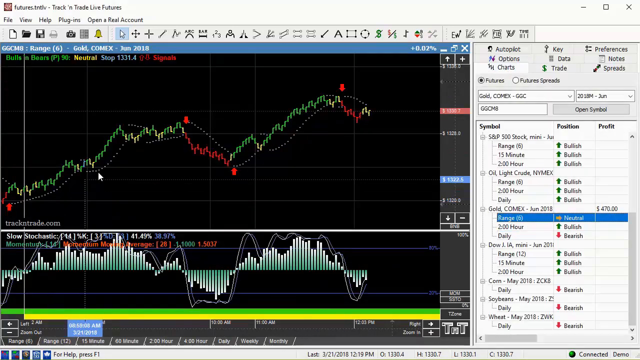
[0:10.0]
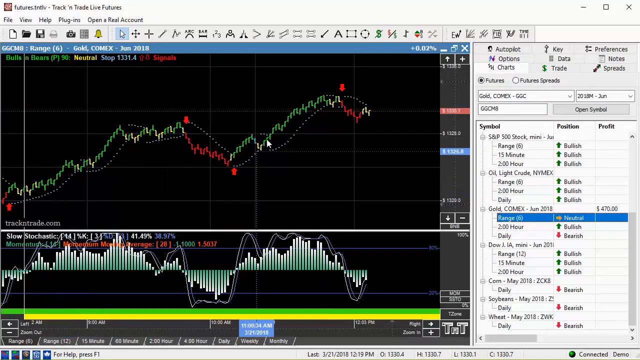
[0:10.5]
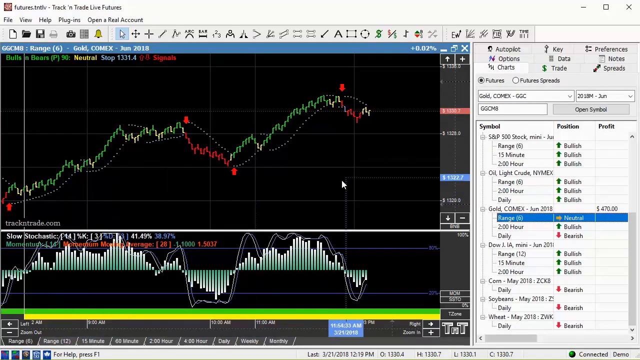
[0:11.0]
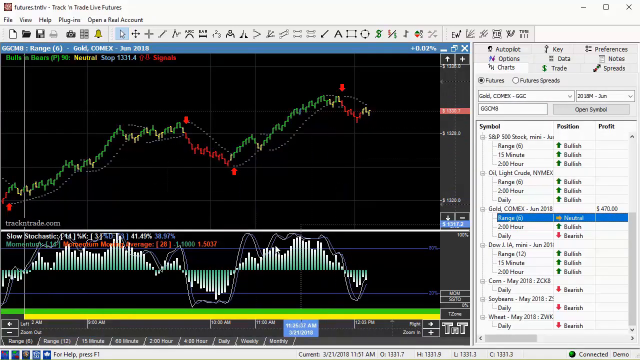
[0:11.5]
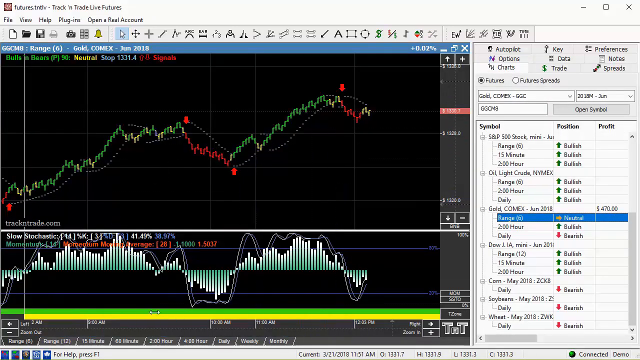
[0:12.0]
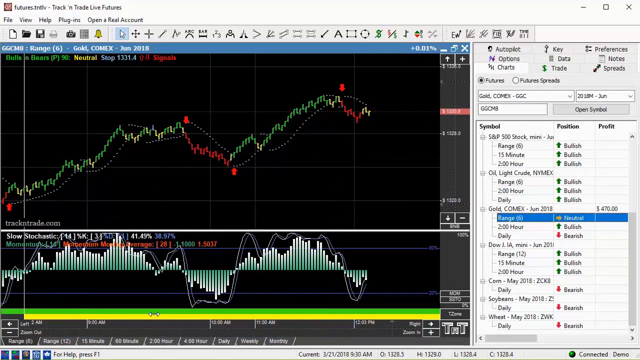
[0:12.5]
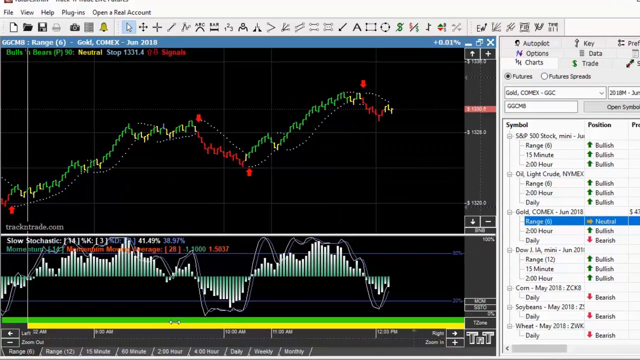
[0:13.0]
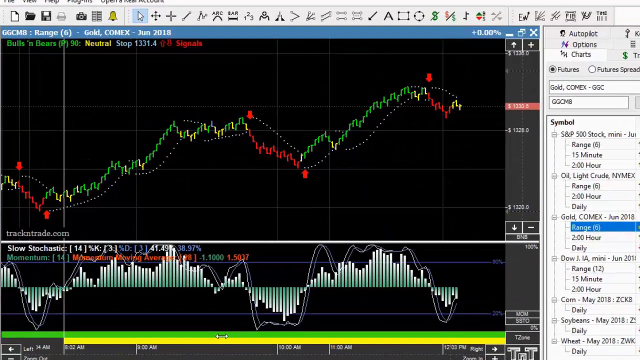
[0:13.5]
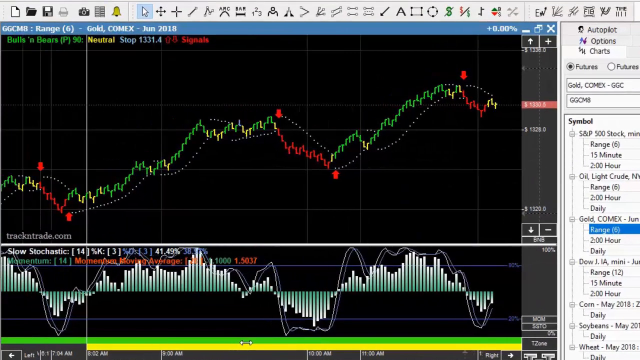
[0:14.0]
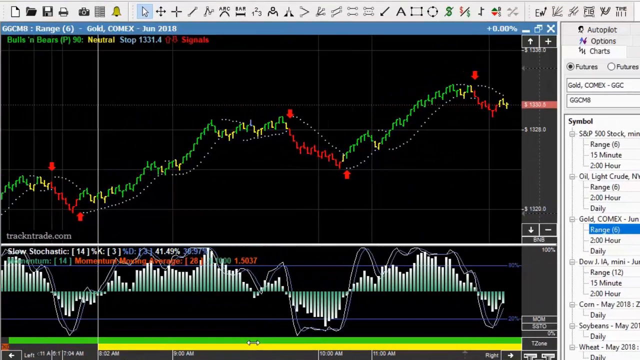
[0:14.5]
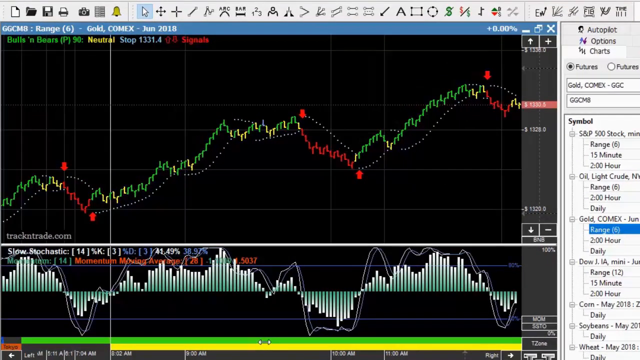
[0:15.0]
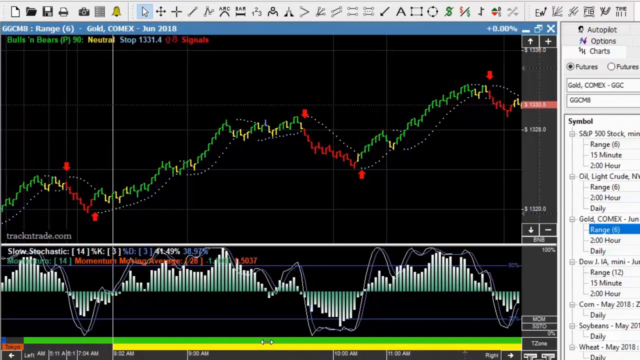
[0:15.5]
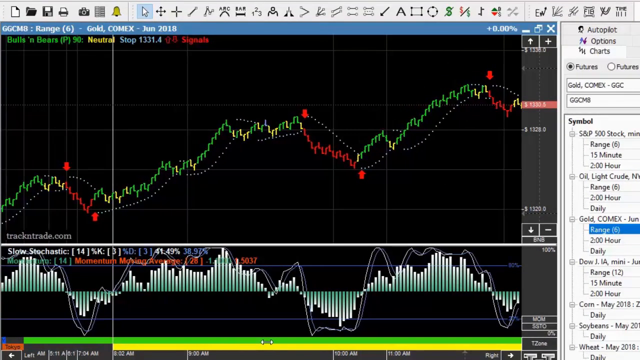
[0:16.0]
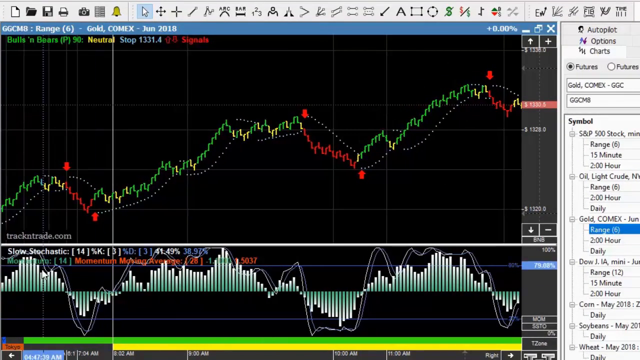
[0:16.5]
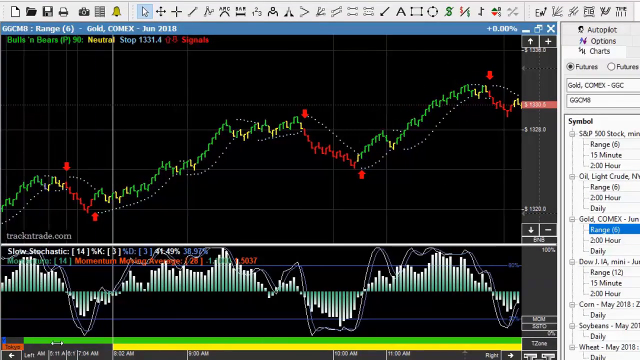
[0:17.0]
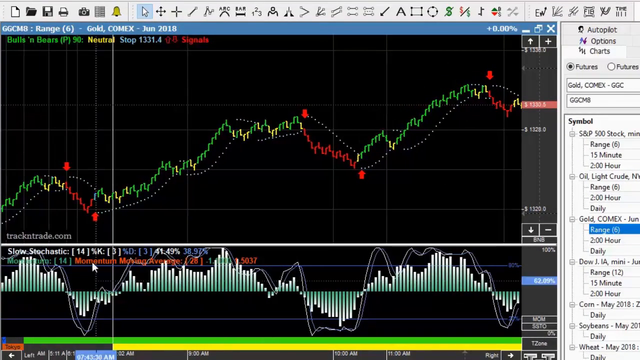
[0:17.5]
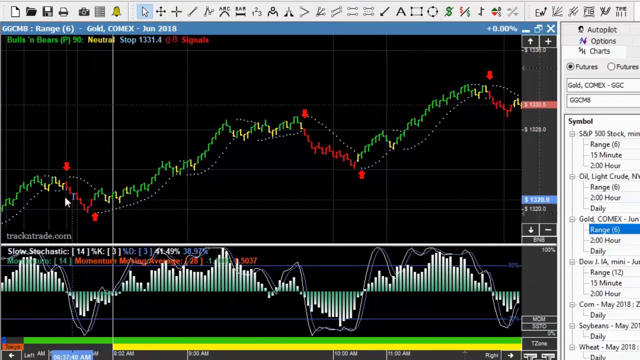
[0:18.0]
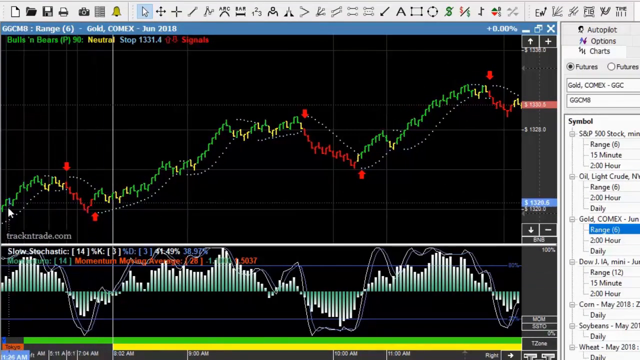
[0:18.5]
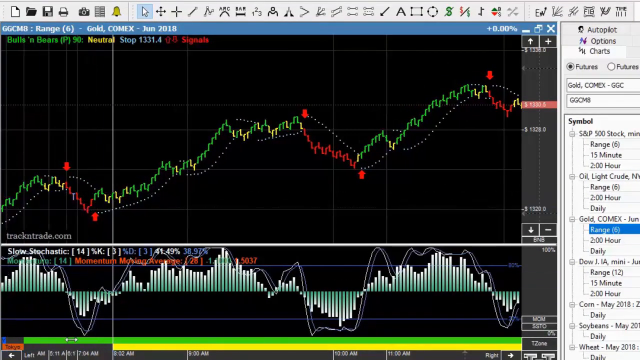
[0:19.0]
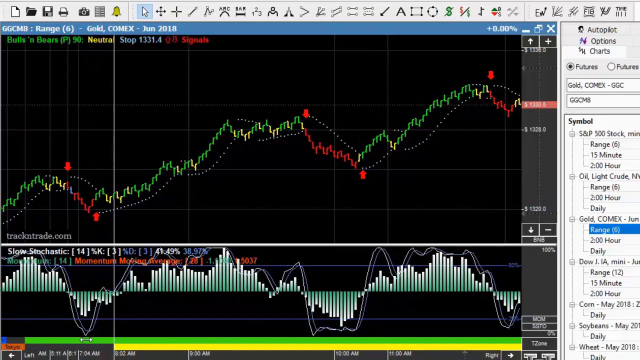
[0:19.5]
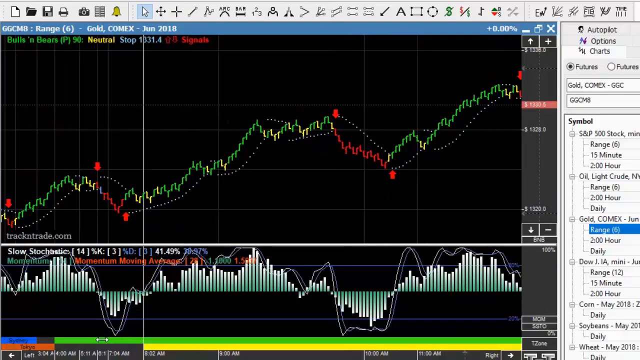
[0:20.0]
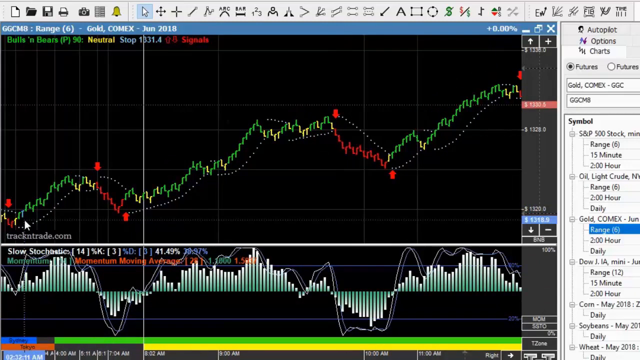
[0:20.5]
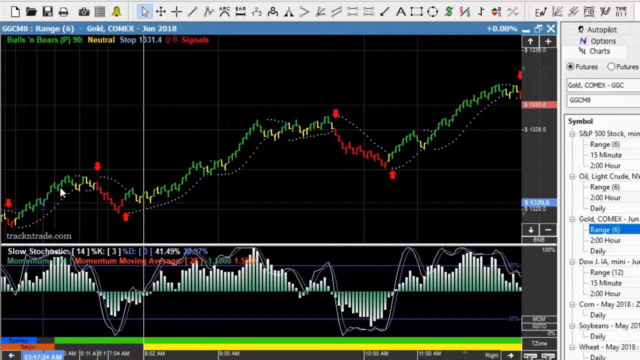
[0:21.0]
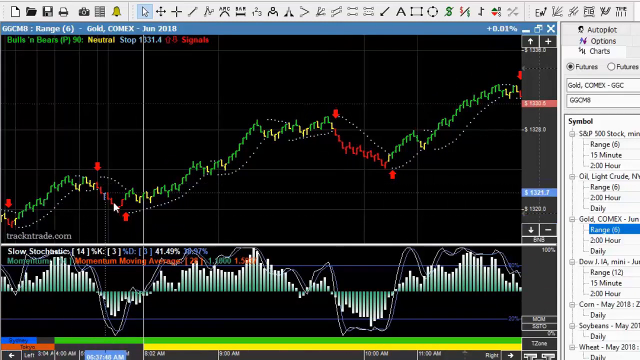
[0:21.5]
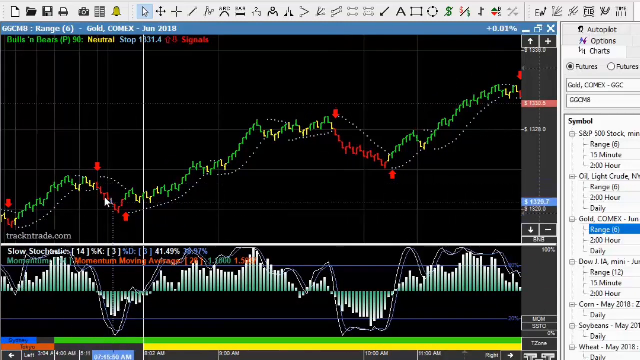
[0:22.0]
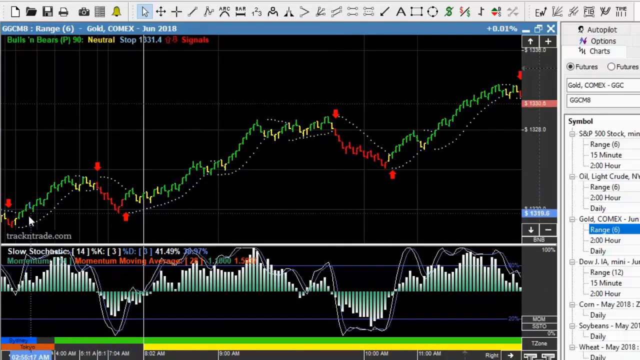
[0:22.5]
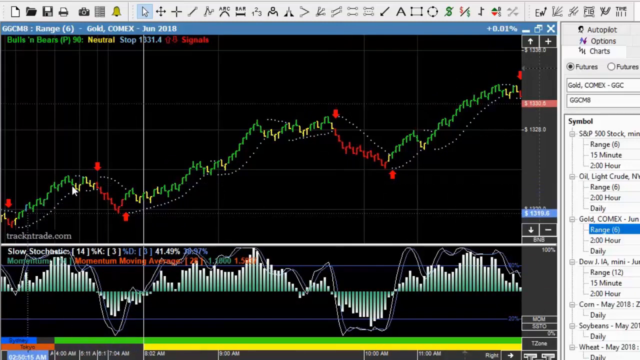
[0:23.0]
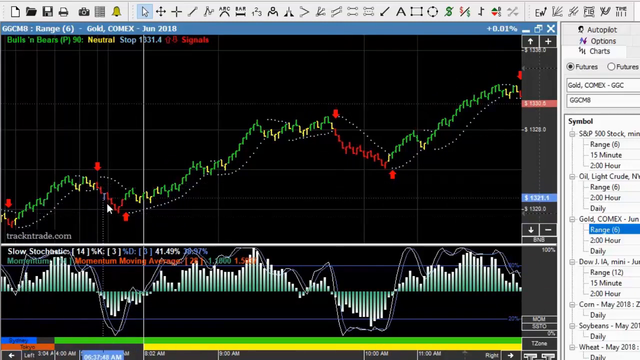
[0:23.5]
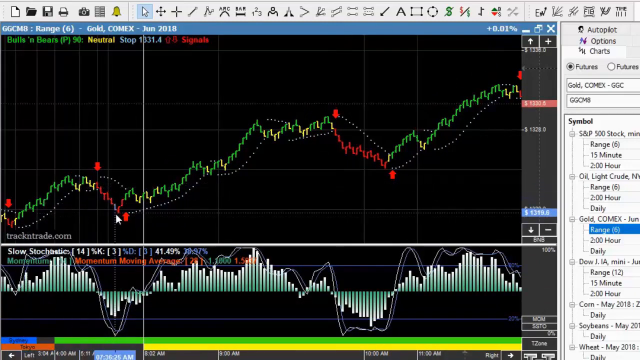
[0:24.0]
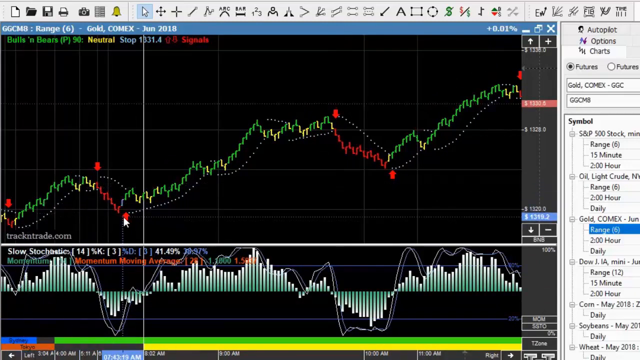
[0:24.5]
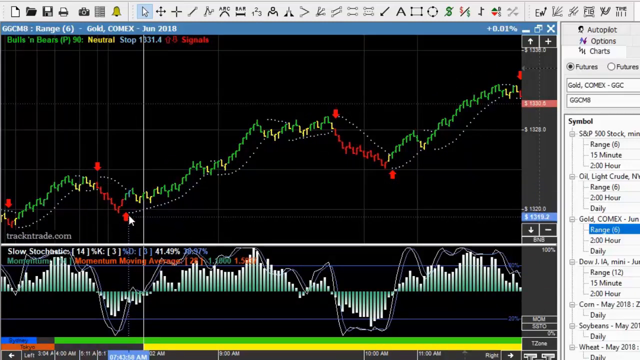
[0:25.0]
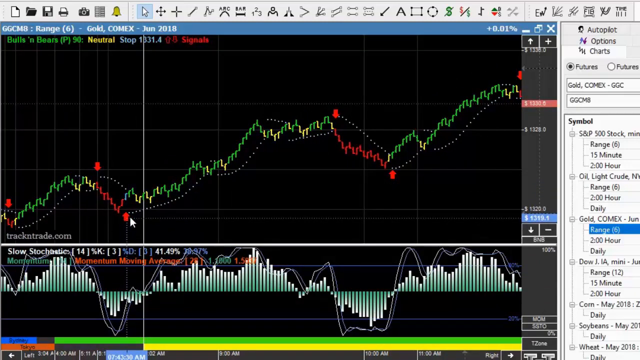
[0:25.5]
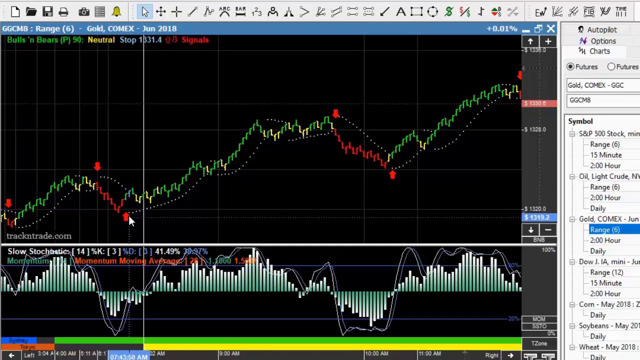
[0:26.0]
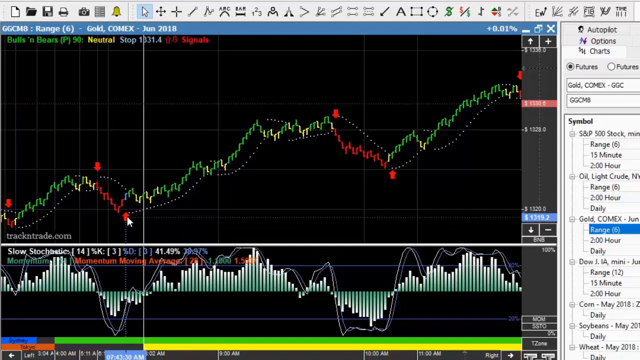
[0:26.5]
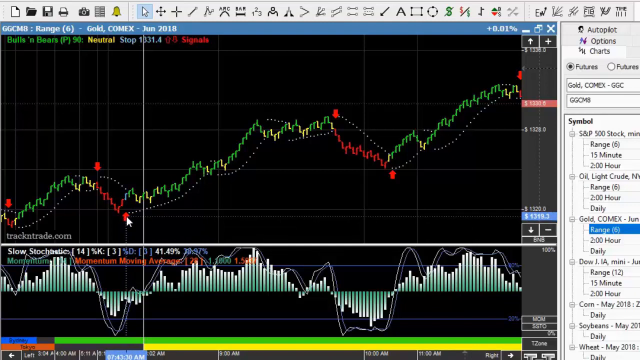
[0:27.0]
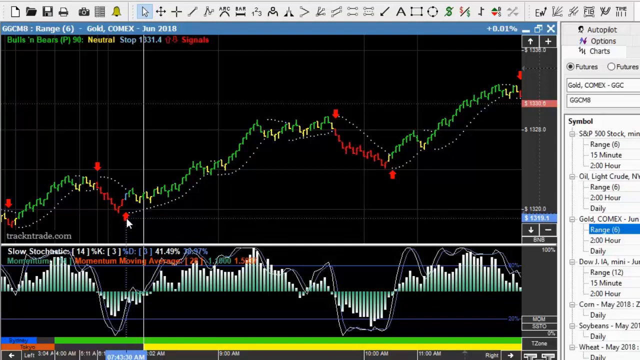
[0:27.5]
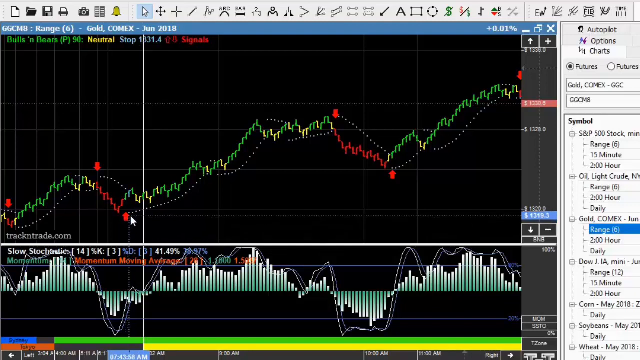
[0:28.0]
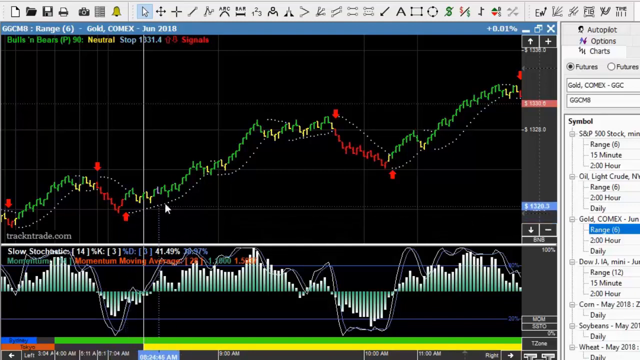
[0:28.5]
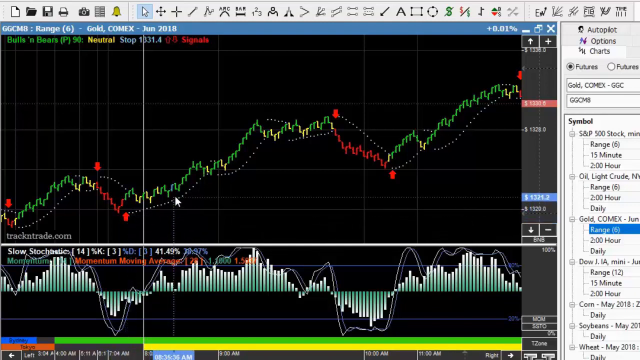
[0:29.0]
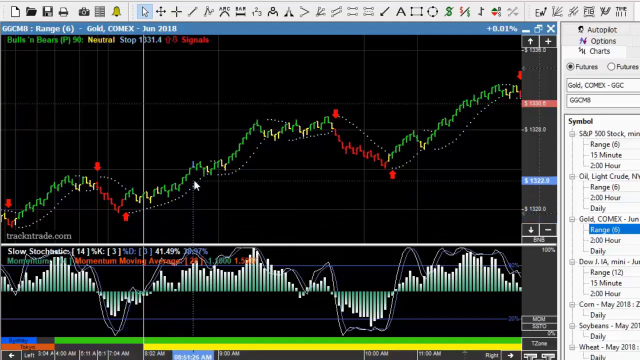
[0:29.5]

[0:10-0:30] A chart on a black background fills the left side of the screen, while on the right side is a white box in which one element is highlighted blue, with neutral at its center. The mouse is on the left side of the screen; it moves a little to the right over the chart and then back to the left. The screen zooms in and starts moving to the left as the mouse moves upwards, then back down, and the screen moves to the left again. The mouse moves back and highlights and traces along a little hill in the graph, following it to a red point, where it goes back and forth, highlighting it. It then follows a line upward and to the right, continuing along that path.